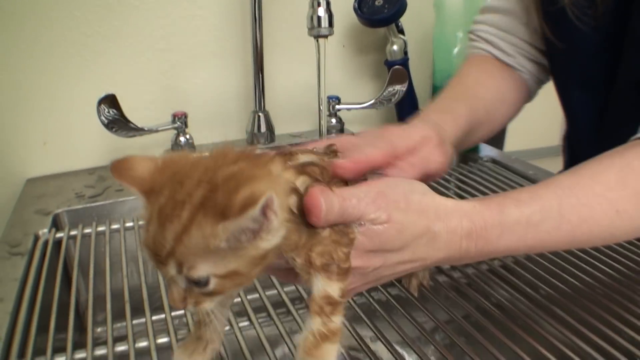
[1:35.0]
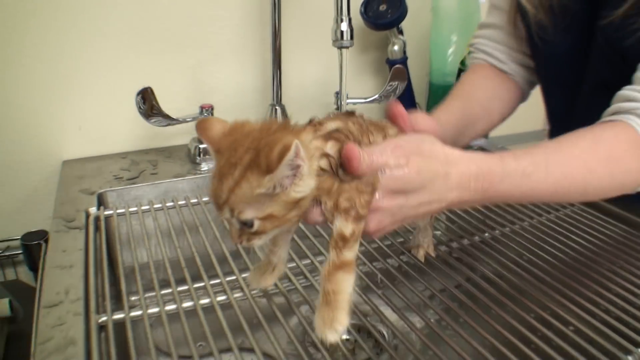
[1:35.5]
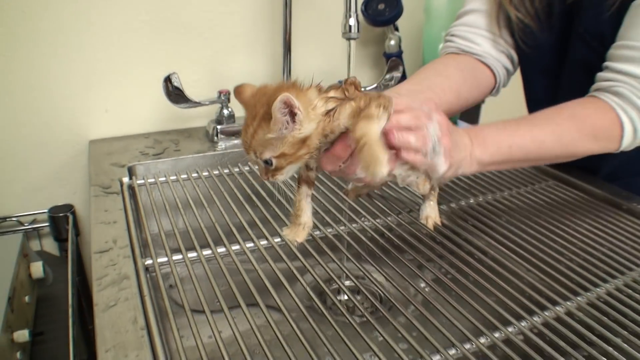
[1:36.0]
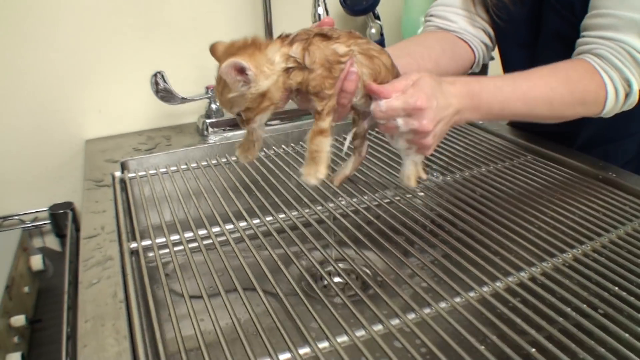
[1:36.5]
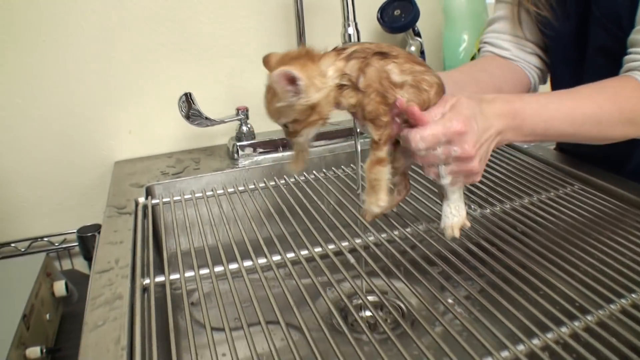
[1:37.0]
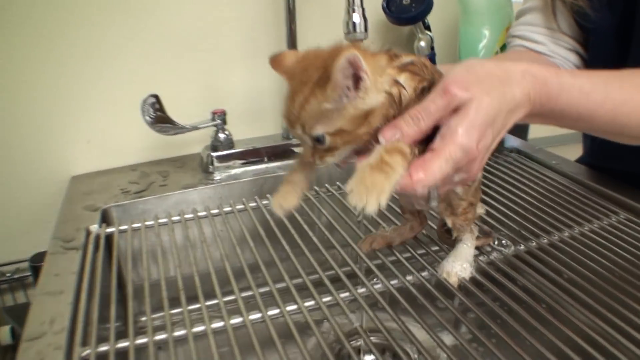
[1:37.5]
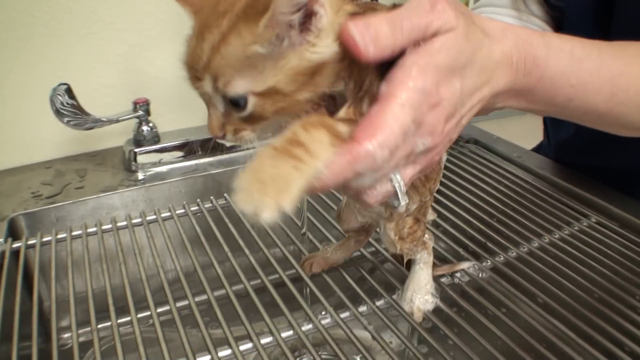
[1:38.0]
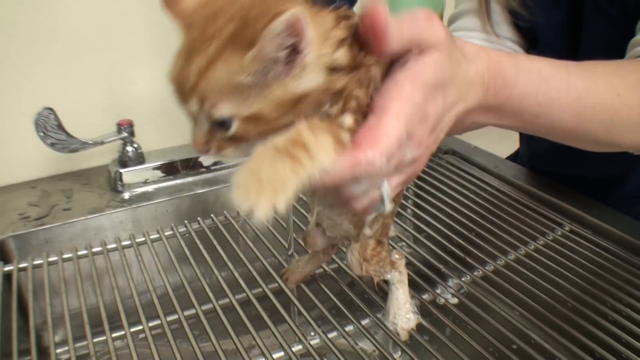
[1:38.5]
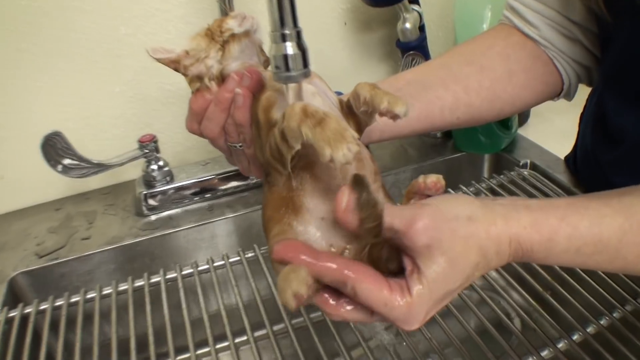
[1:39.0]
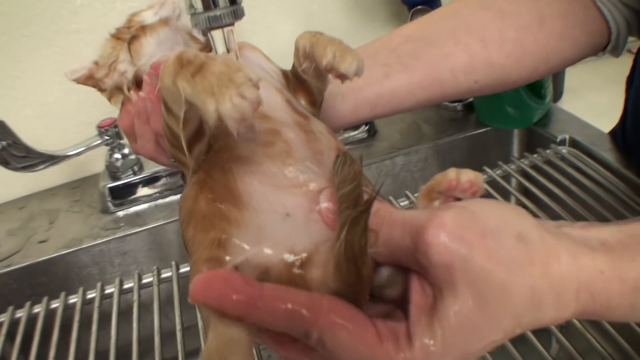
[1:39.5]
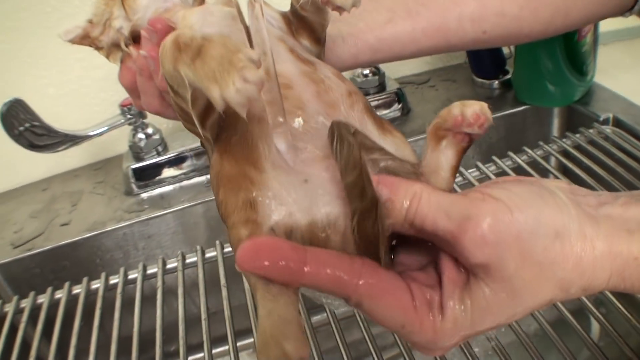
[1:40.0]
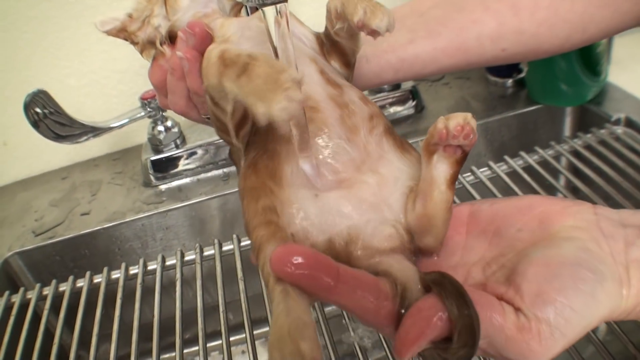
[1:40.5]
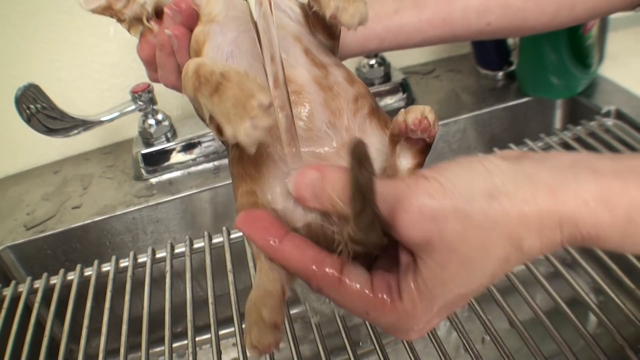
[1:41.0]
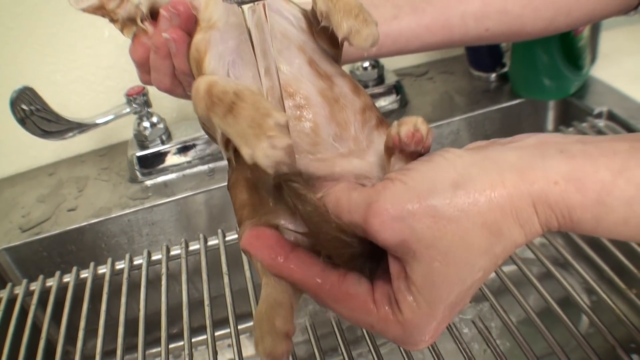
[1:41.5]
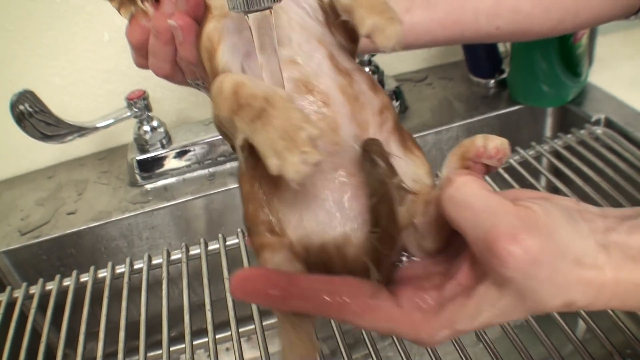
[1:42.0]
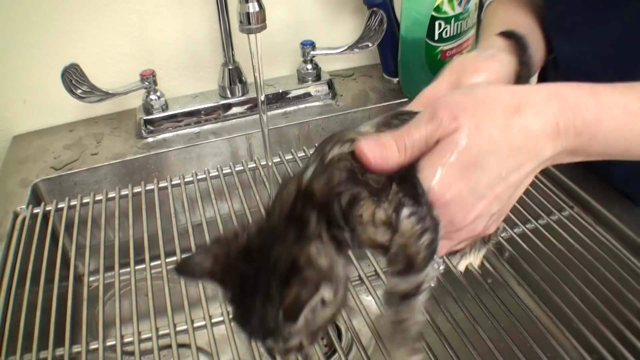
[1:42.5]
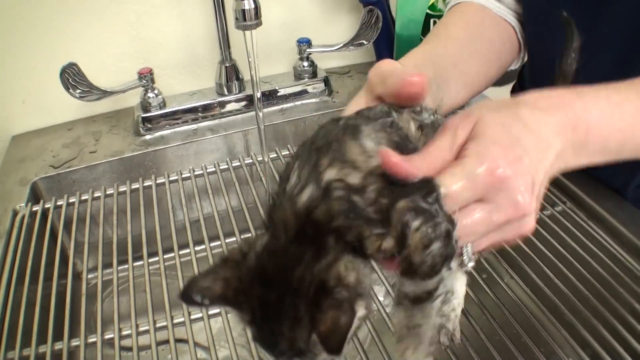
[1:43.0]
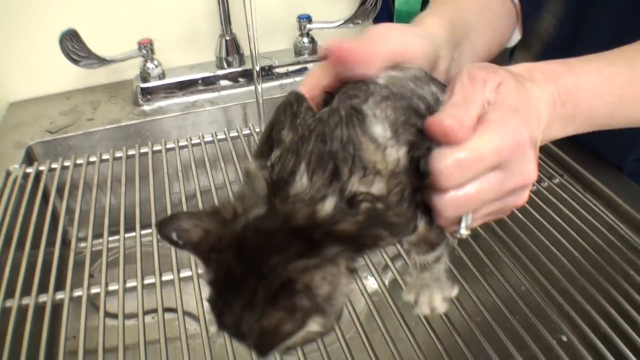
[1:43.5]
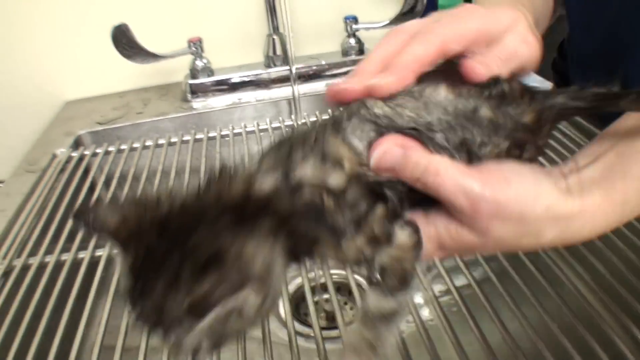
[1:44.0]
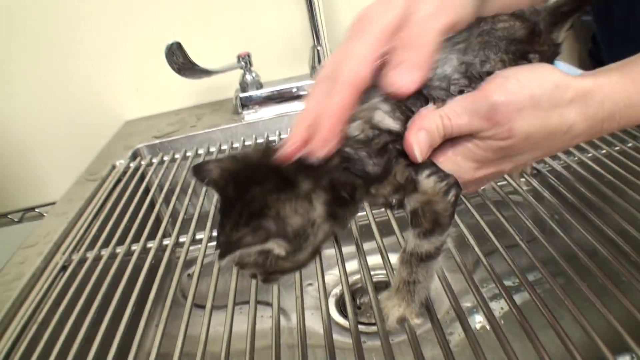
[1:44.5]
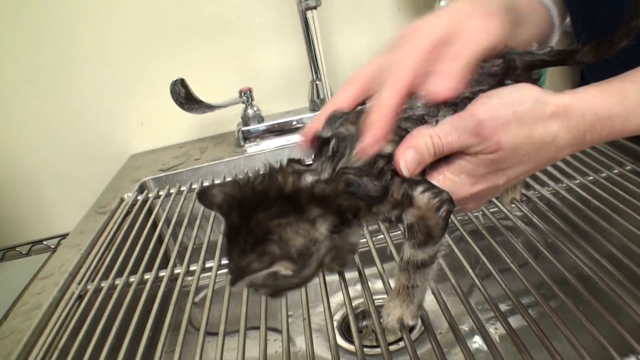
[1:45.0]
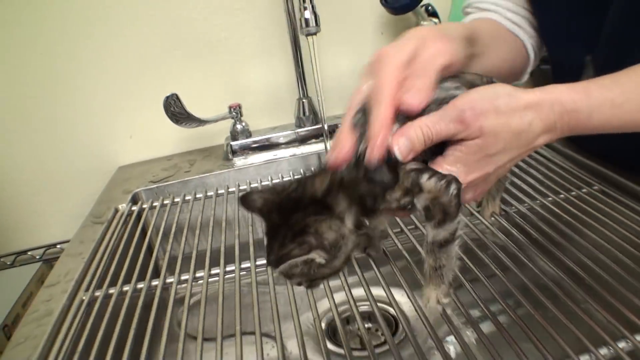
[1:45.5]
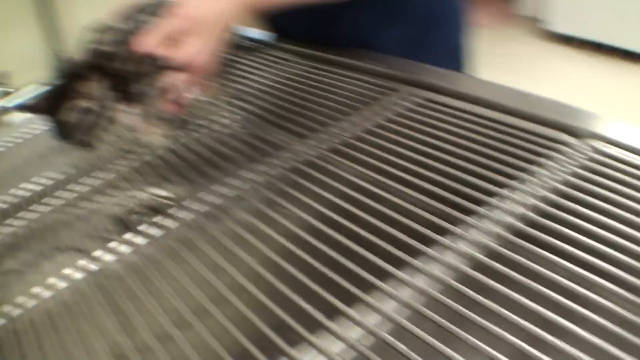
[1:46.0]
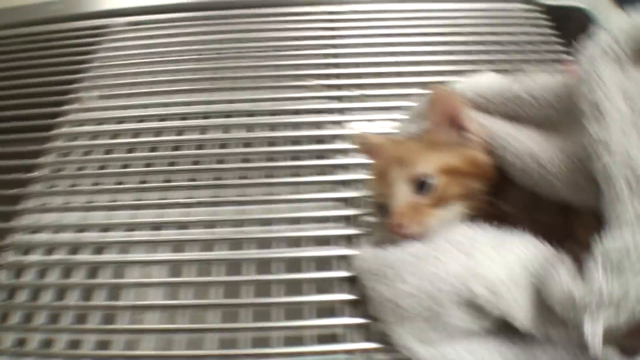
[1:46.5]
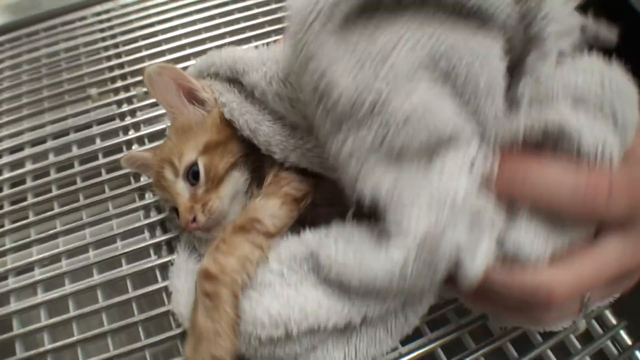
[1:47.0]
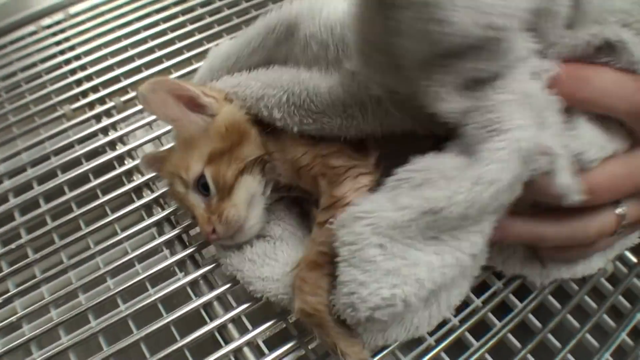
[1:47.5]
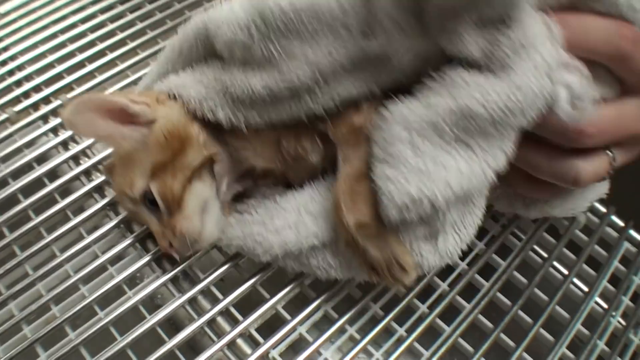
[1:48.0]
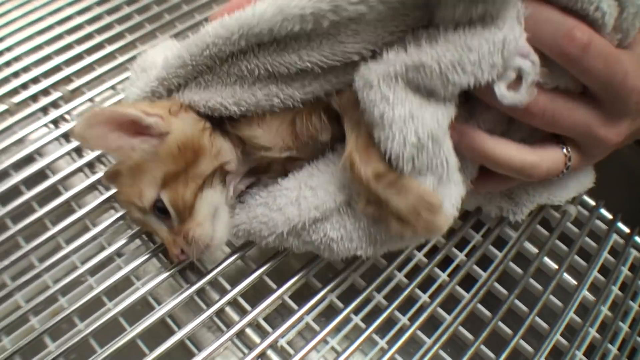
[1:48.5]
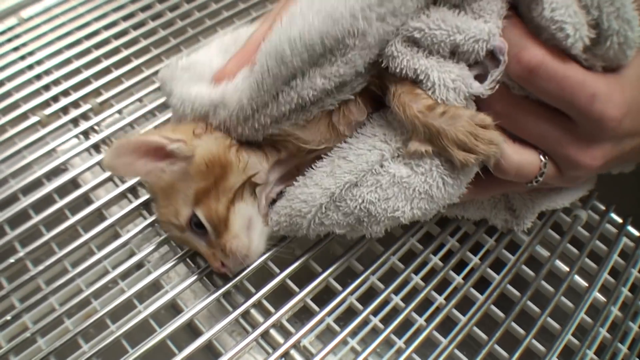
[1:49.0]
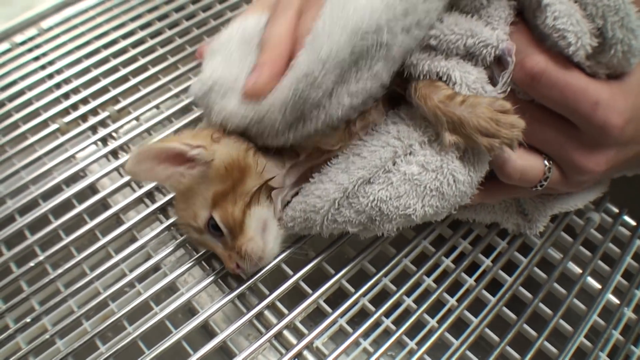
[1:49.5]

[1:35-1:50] At the vet ranch, the kittens are on the table in their little cat carrier, still trying to run off. The ginger kitten is getting a syringe of medicine, and one of the tabby kittens gets some too. The man gives them a lot of what appears to be medicine as they sit in the basket, and some of the kittens get curious and look over the edge of the basket. One of their siblings is being washed in the assembly-line cat wash. Two kittens are put together as if to say hello to each other, then a kitten goes into the white fluffy towel while its sibling is washed. A cute little chin is shown, and the kittens have fleas all over their undersides.